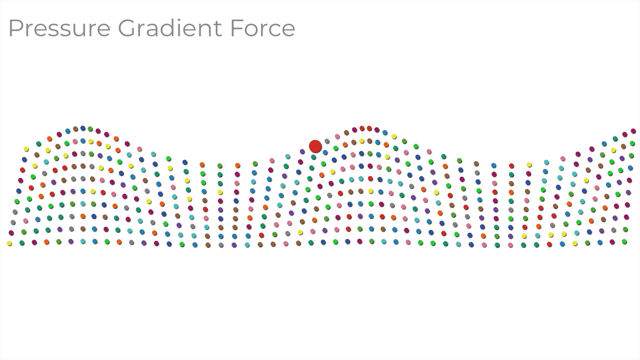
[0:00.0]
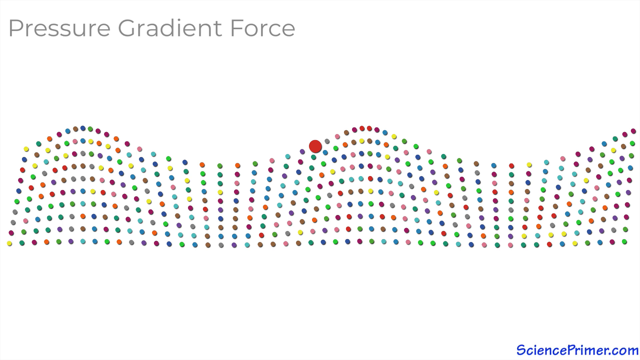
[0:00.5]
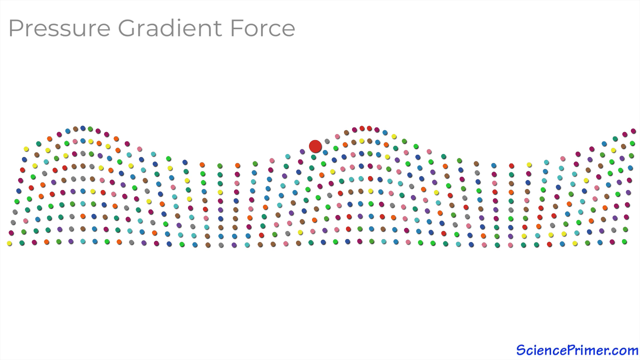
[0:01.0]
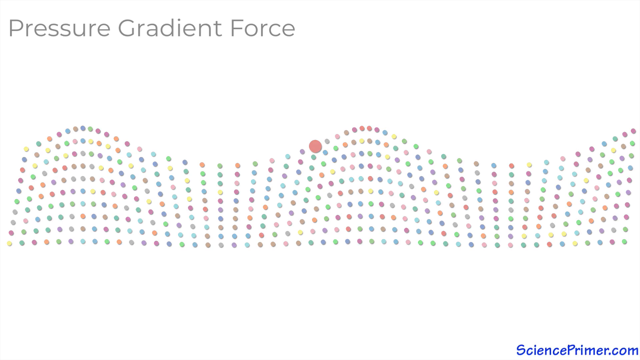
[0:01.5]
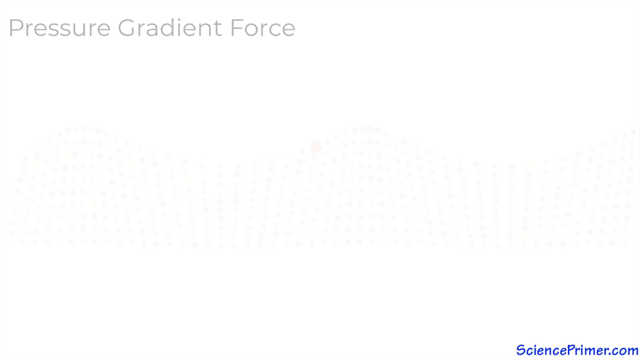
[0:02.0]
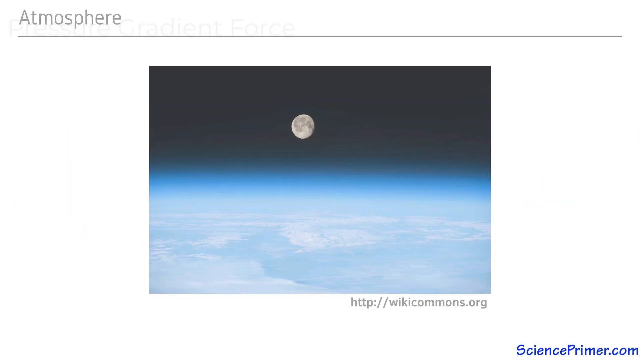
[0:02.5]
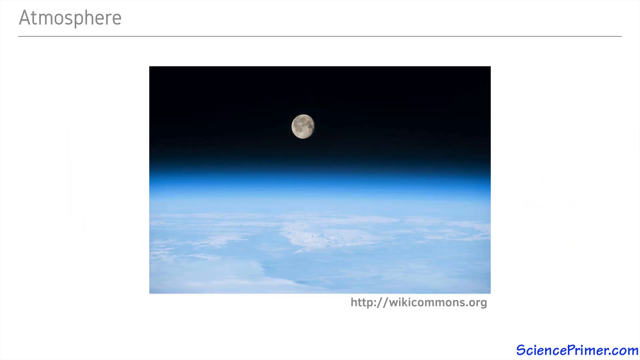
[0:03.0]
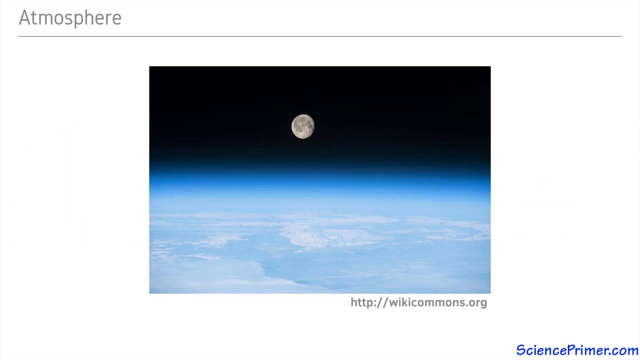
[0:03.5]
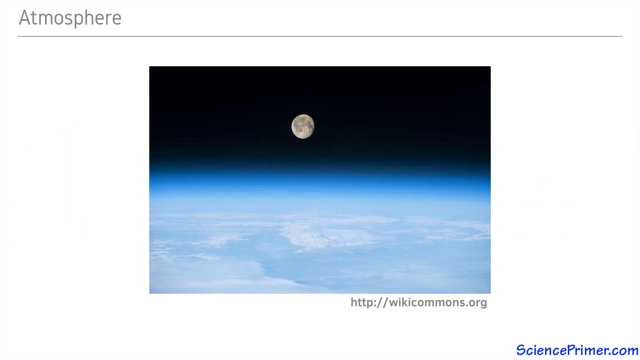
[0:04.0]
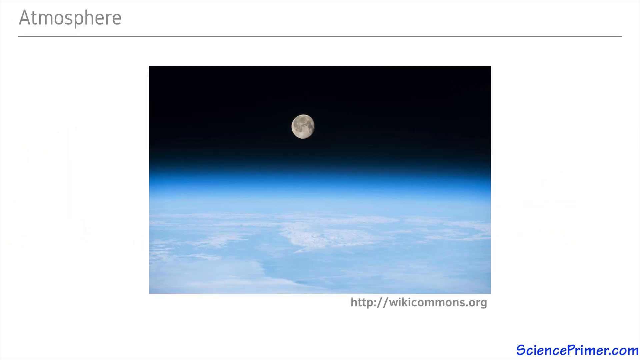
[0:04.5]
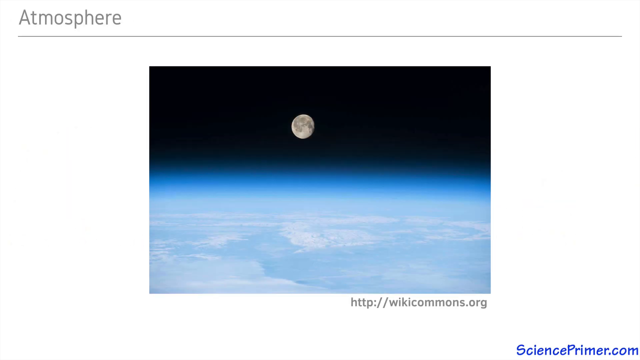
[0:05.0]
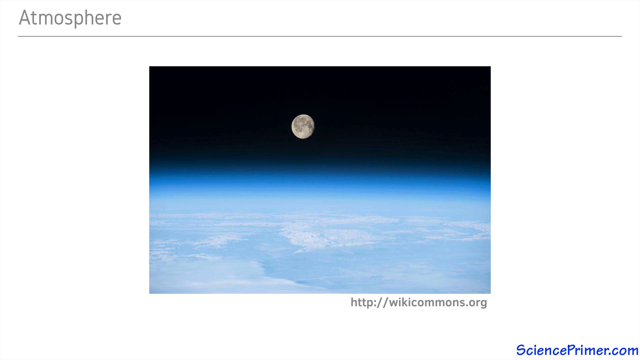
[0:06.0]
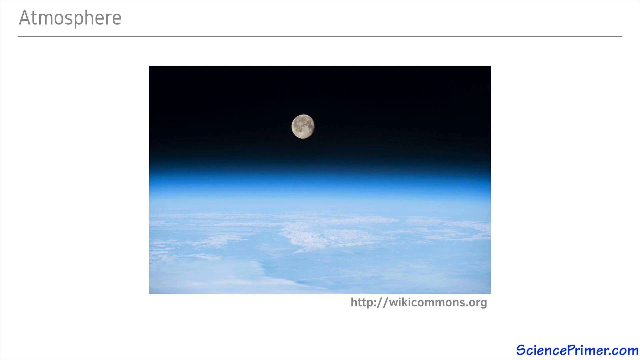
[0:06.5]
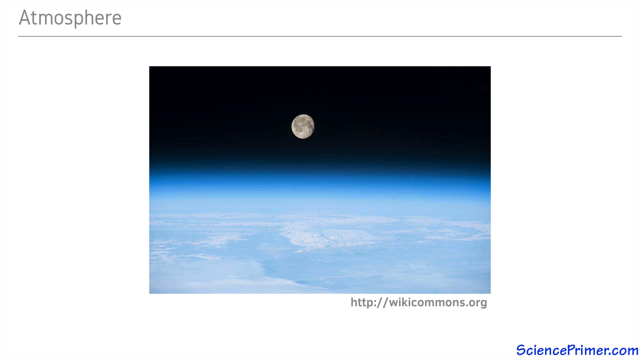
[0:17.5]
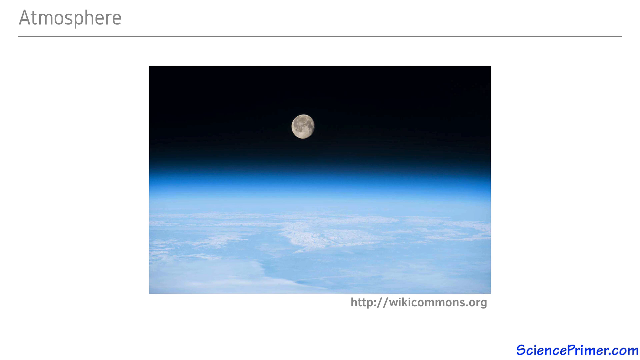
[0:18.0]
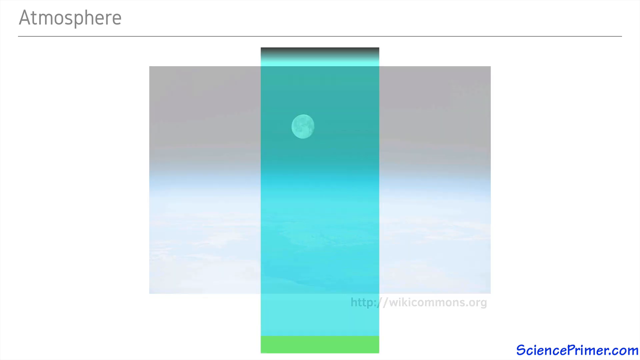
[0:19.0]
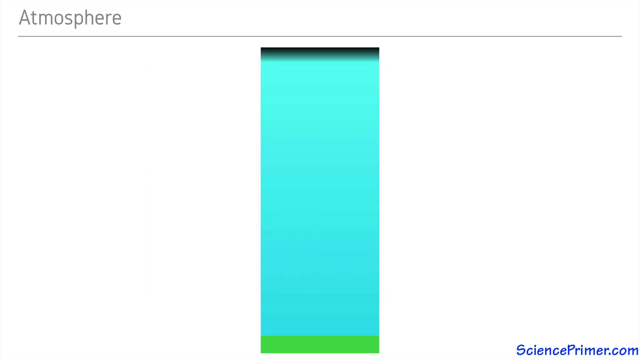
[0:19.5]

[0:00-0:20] Many colorful dots form a wave-like pattern on an all-white background, and in the middle, on top of the wave, is a large red dot that is bigger than the dots around it. Text in the top left corner reads "Pressure gradient force." The colorful dots then disappear and an image of the moon appears, with what looks like Earth's atmosphere below it: the bottom part of the image is very light blue and appears to be the atmosphere, while the top half is very dark, showing outer space. The light gray moon is in the center of the upper area. The word "Atmosphere" is in the top left corner. On the bottom right side, below the picture, is a URL reading "wikicommons.org," and in the bottom right corner is another website, "scienceprimer.com." Next, a long, upright light blue rectangle appears, black on top and light green on the bottom.